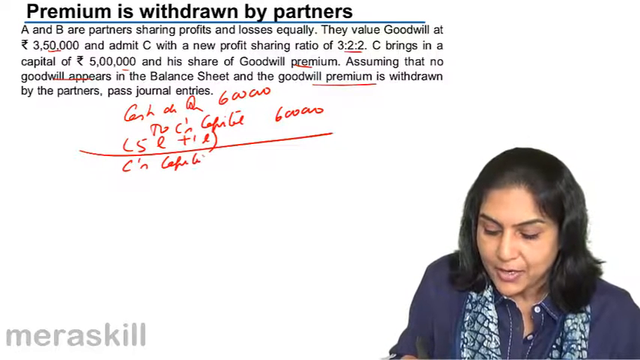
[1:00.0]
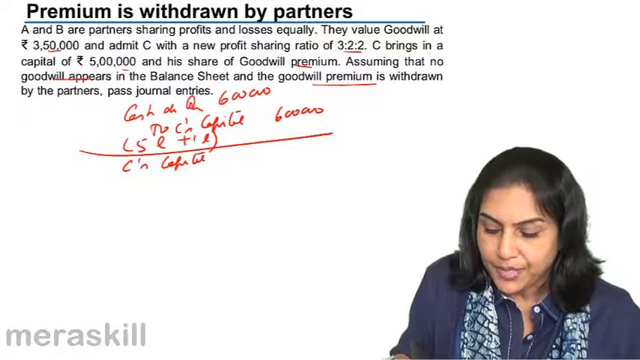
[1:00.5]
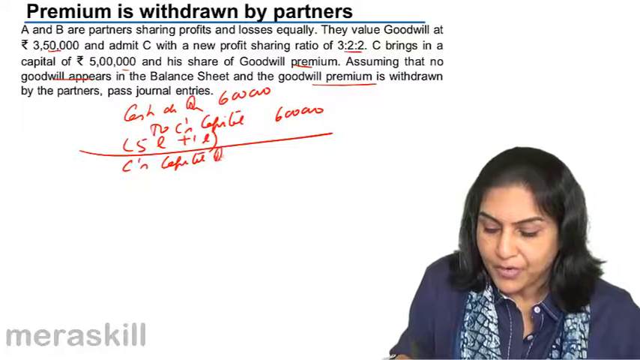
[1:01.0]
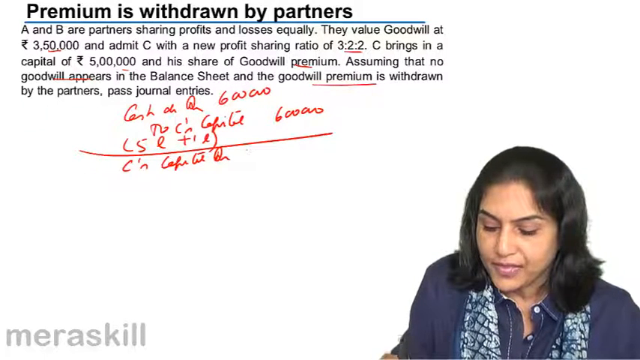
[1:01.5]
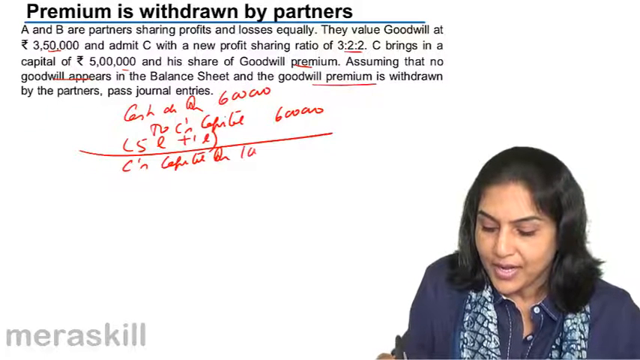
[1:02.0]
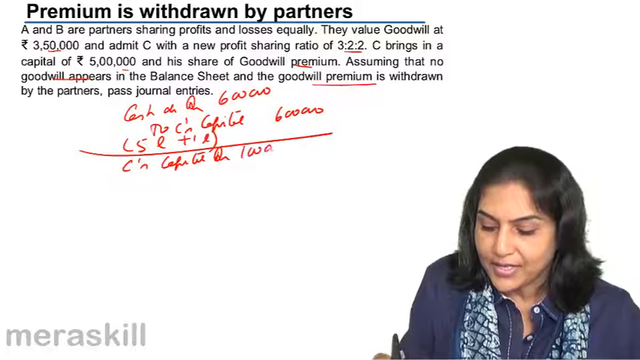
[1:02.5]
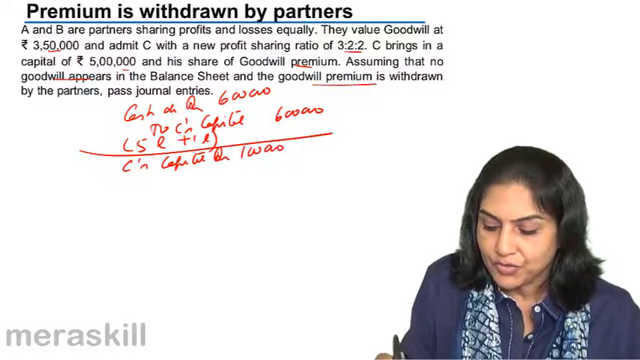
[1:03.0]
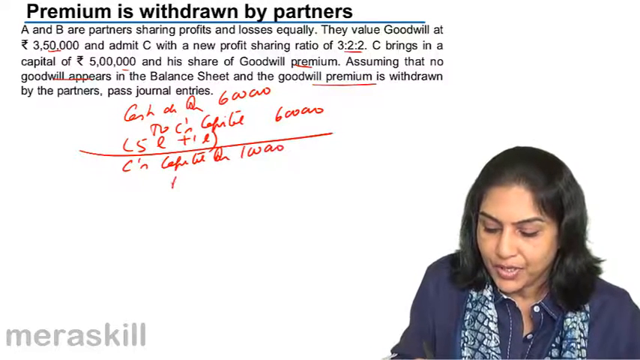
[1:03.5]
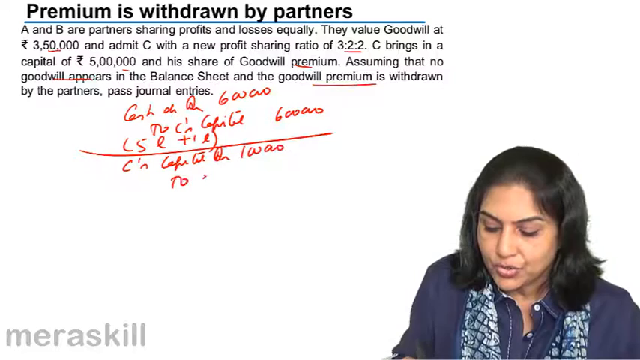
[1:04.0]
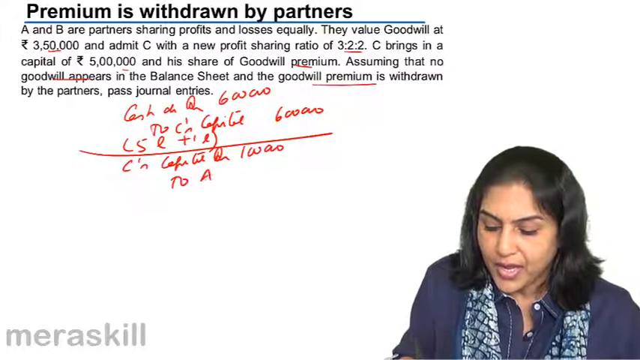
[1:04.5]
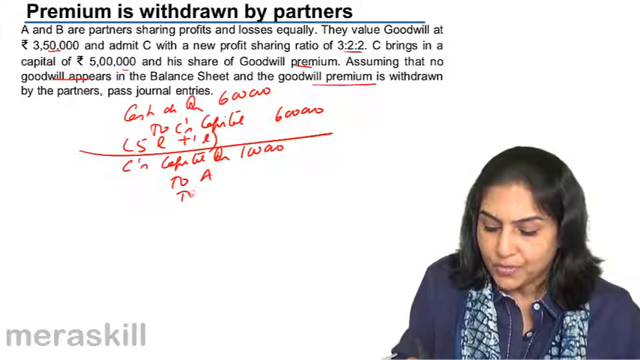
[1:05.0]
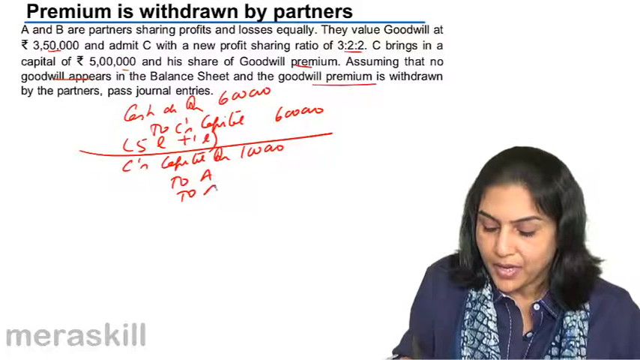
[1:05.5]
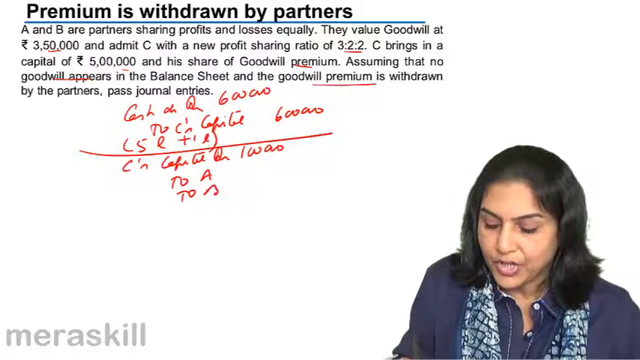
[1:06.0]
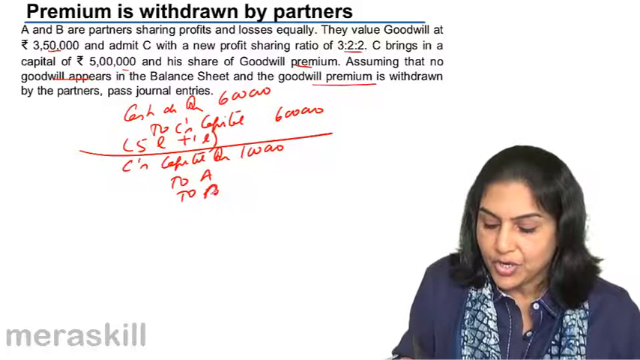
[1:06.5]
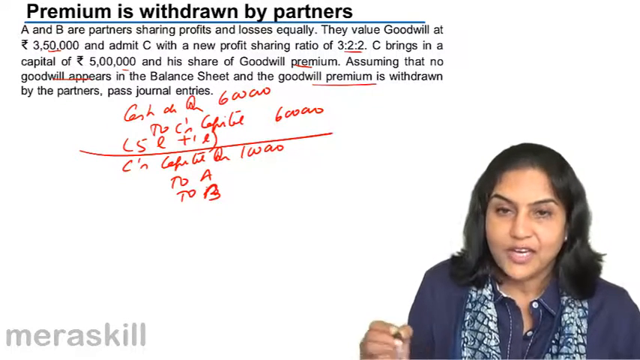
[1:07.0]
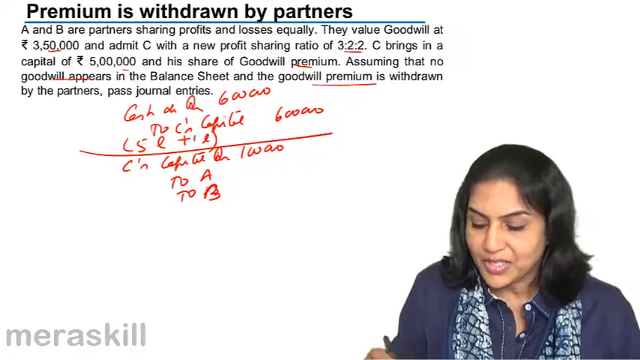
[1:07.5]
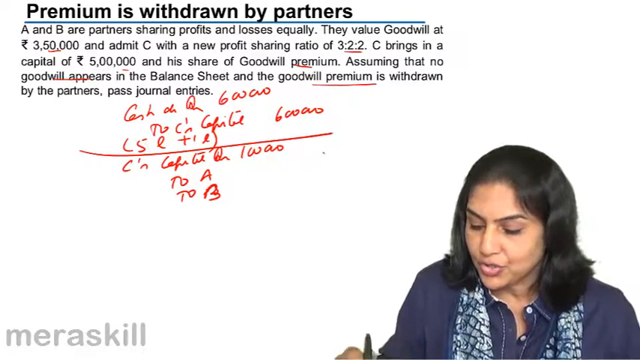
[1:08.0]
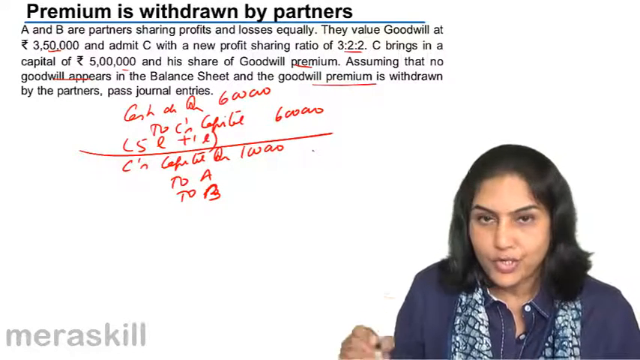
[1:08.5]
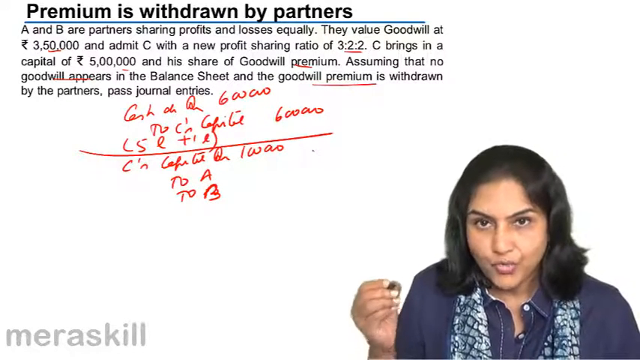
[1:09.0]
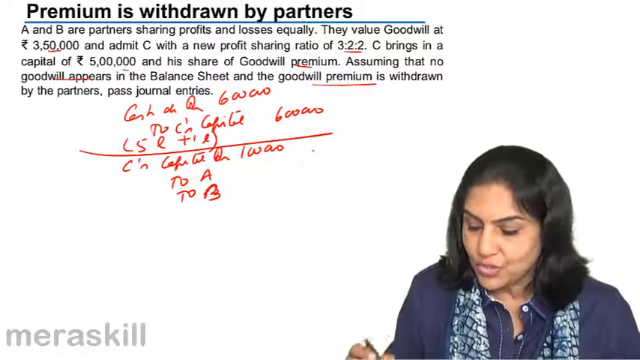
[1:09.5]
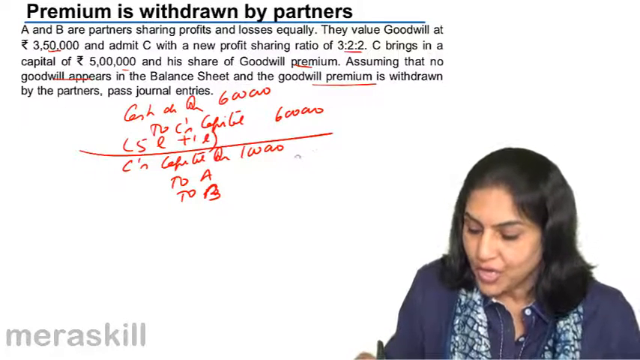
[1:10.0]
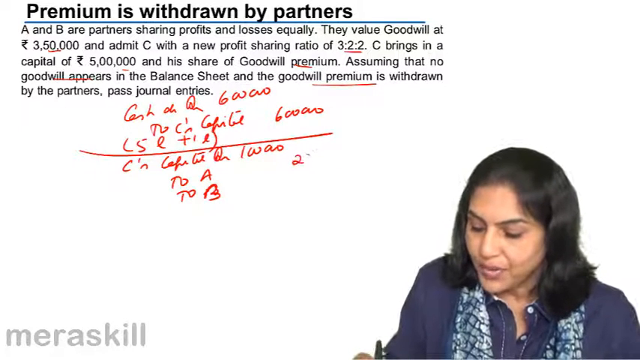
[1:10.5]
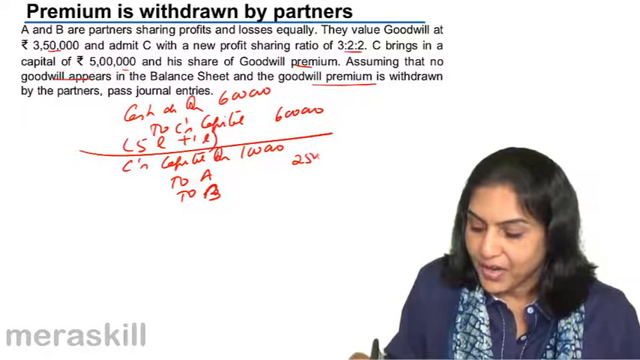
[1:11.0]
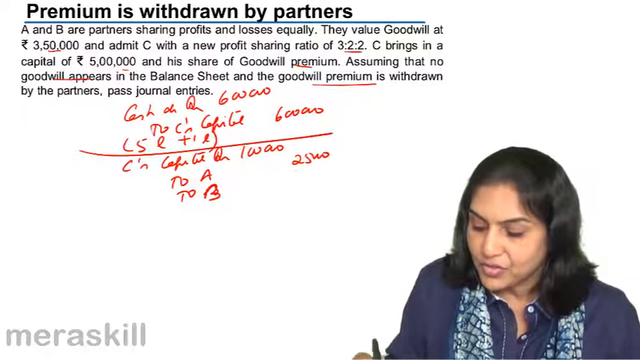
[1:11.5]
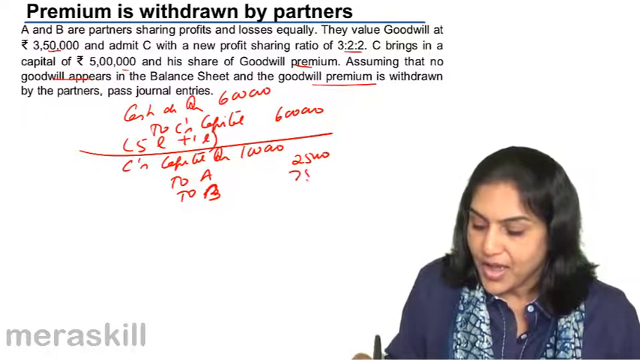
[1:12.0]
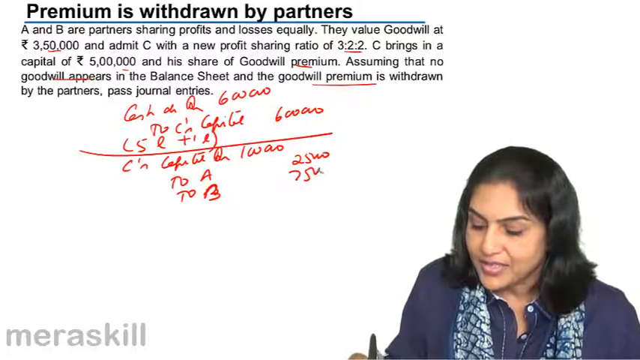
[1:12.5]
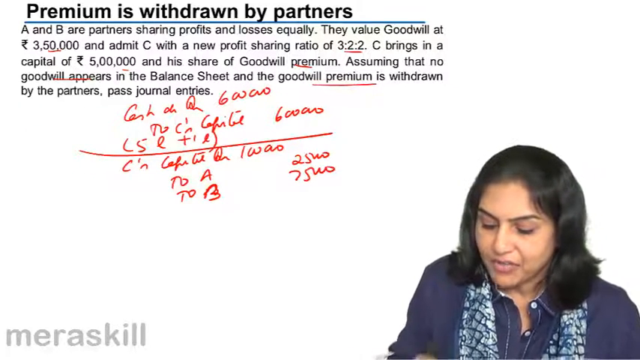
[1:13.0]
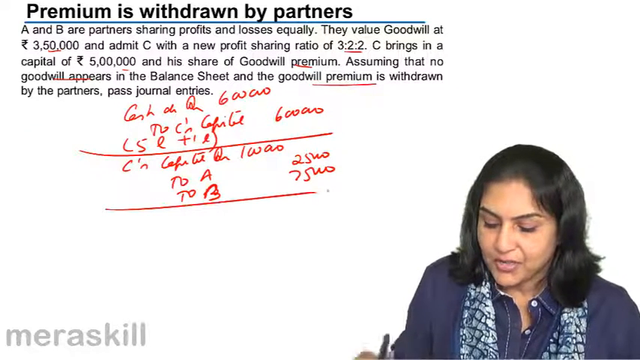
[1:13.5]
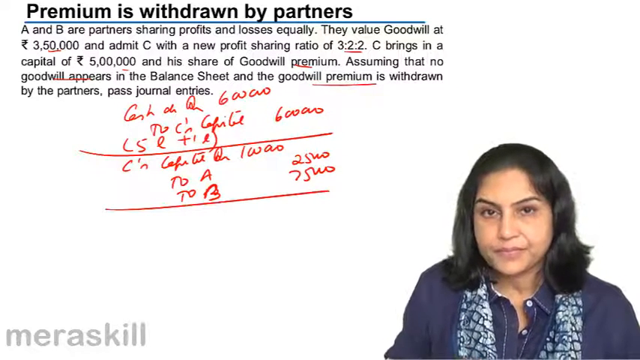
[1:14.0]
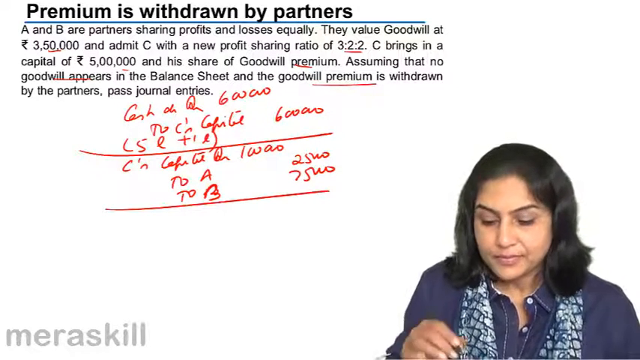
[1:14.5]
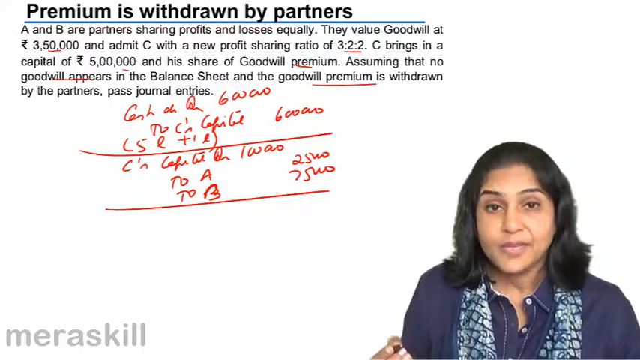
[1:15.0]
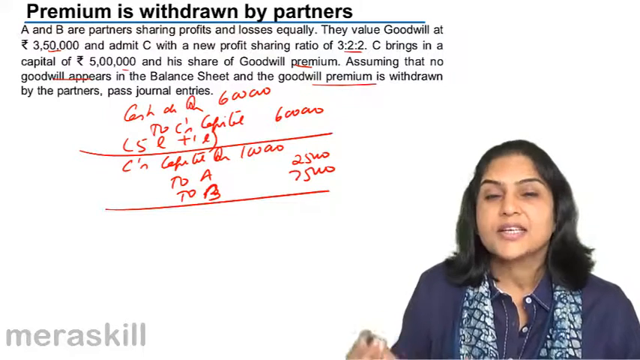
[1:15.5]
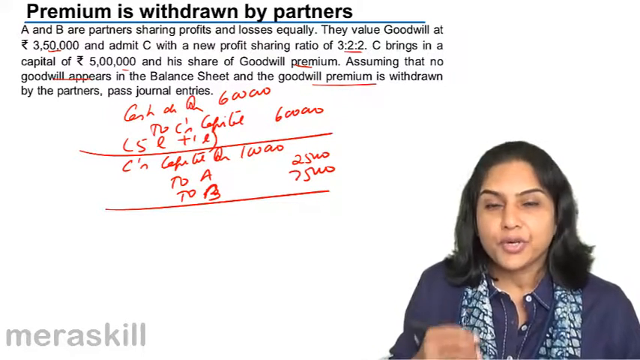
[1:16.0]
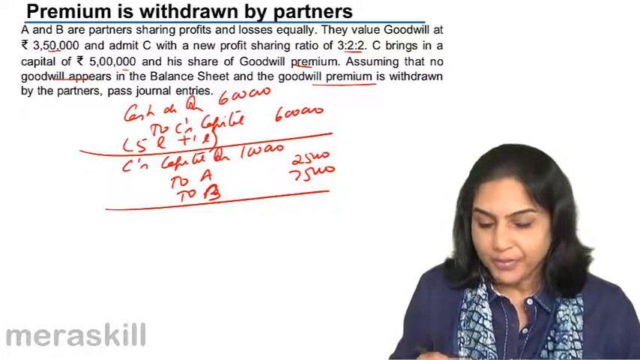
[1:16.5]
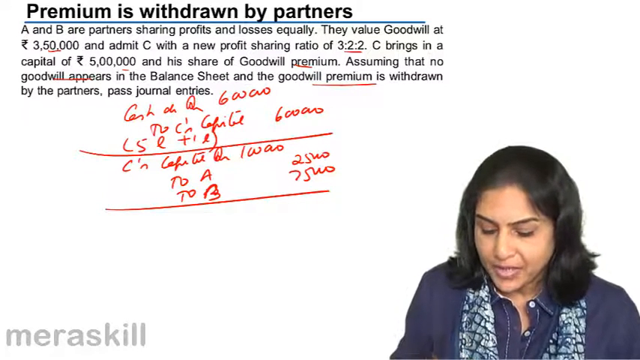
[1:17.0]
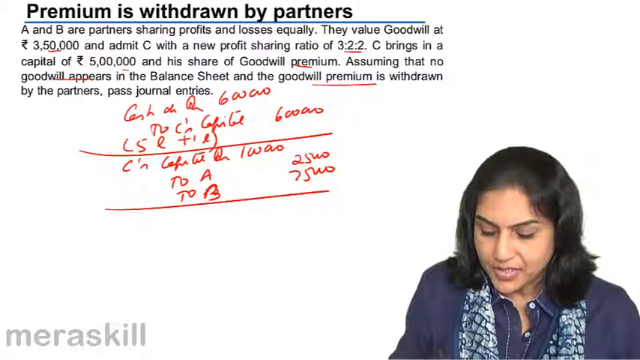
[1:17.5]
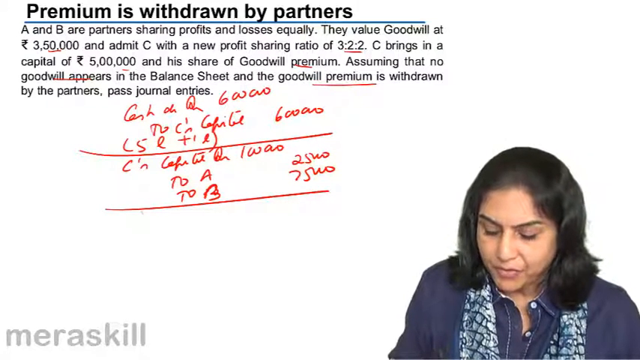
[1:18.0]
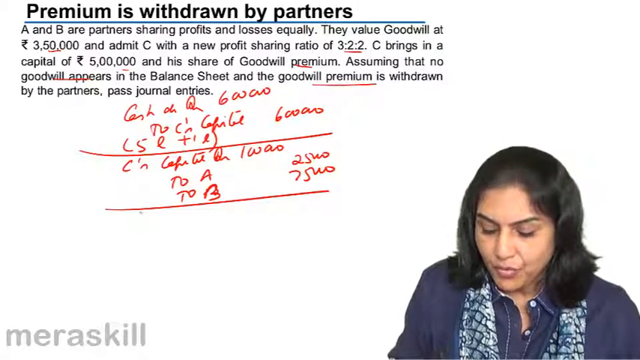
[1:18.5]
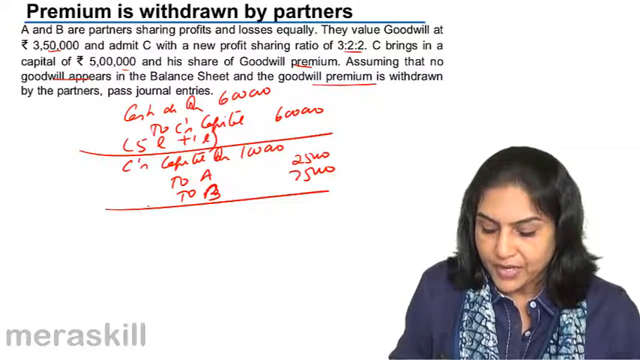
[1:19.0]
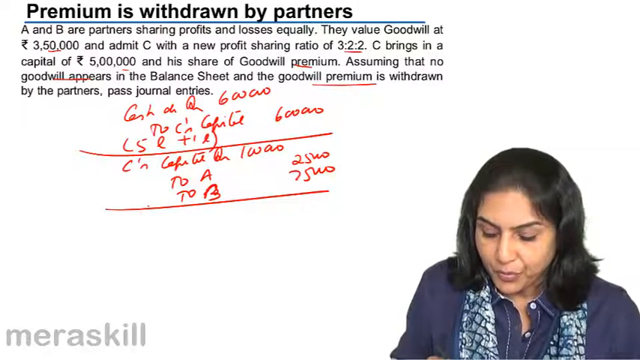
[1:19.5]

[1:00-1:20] The speaker in the bottom right corner has written more red text on the screen. She continues looking down at the device she is working on and writes more text: she writes a line, moves under it and keeps writing, completing several lines. She then takes her eyes off the device, looks into the camera, and holds up the pen in her right hand between her index finger, thumb and middle finger, with the tip pointing toward the camera. She looks at the camera briefly, looks back down, then back up again while moving her right hand up in the air in a circular motion as she speaks, making her point. She then looks back down at the device and continues to speak while writing, the text appearing on the screen as she writes.